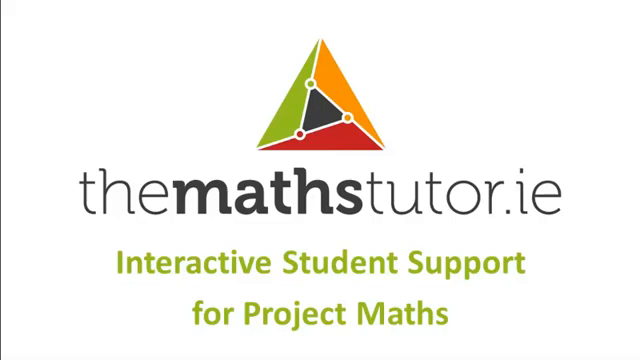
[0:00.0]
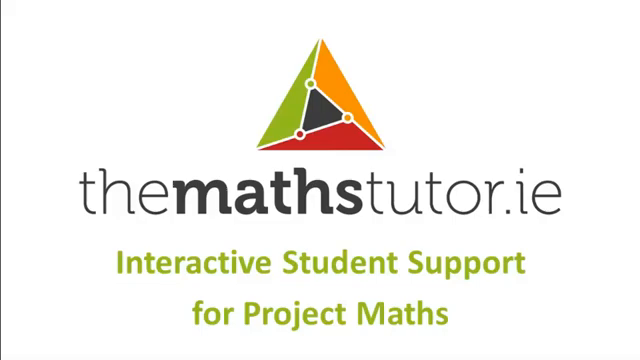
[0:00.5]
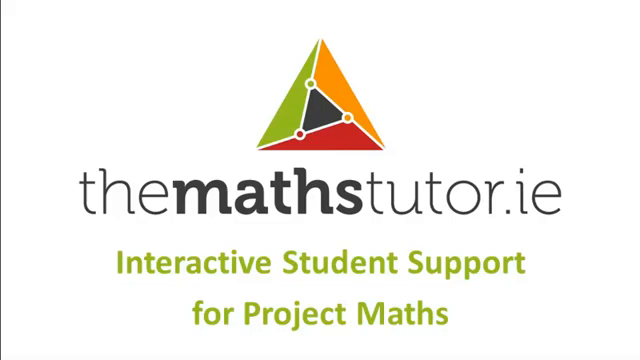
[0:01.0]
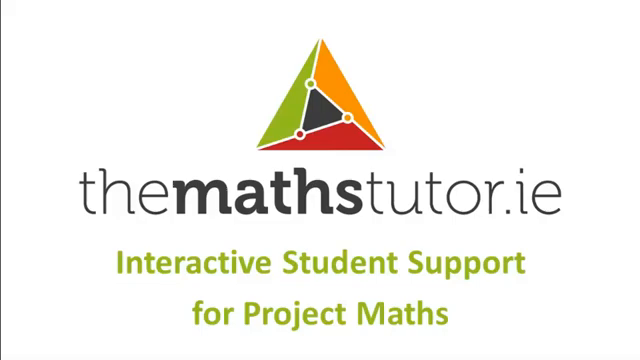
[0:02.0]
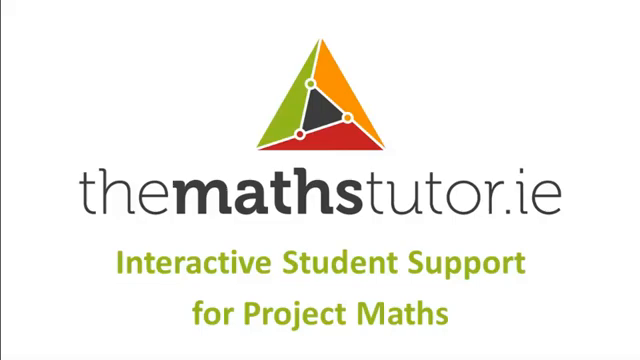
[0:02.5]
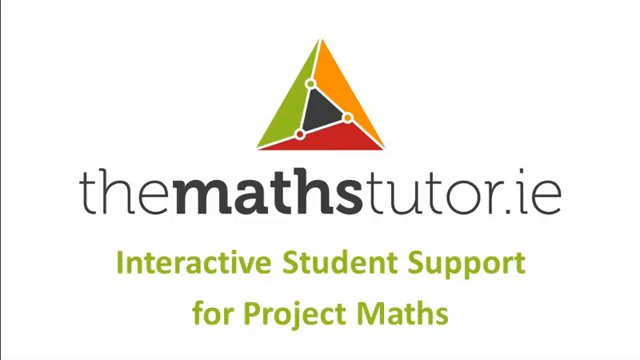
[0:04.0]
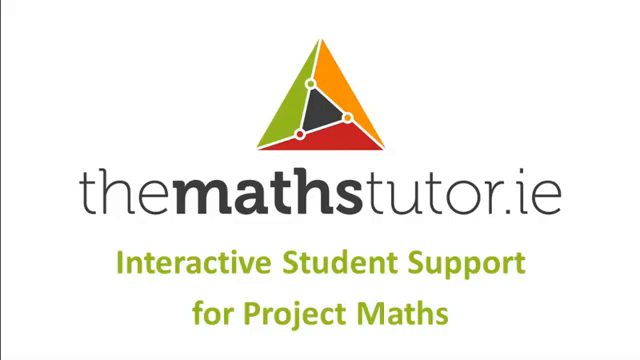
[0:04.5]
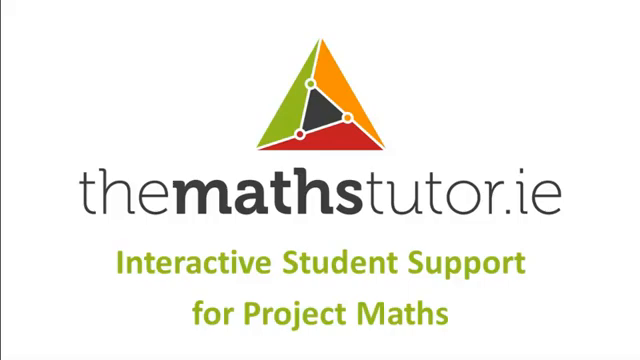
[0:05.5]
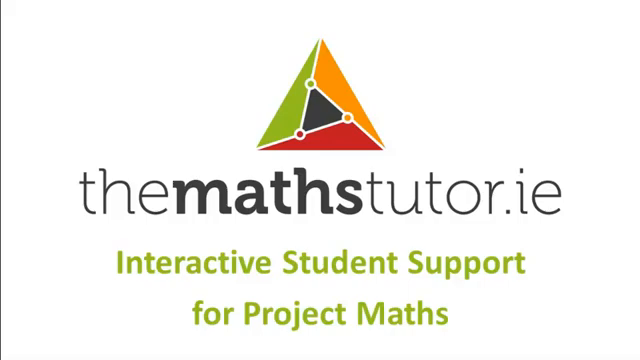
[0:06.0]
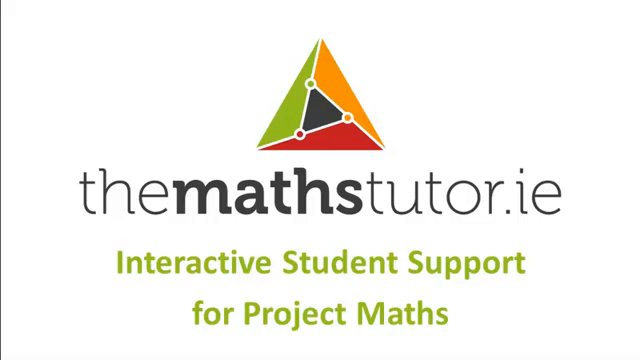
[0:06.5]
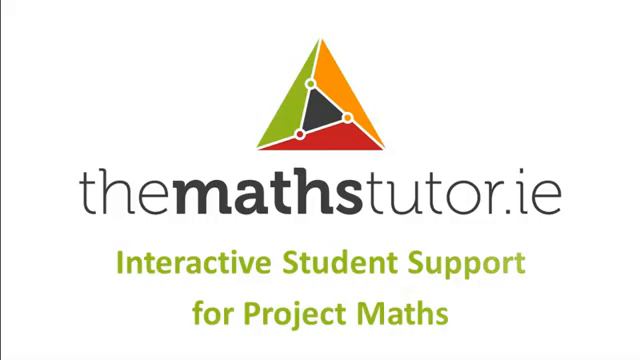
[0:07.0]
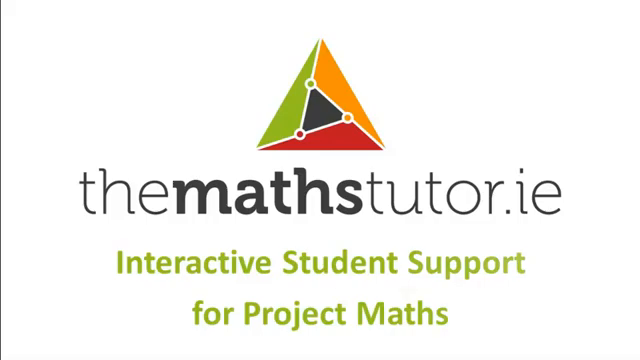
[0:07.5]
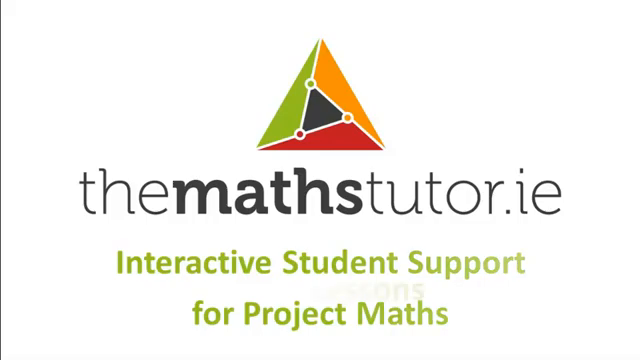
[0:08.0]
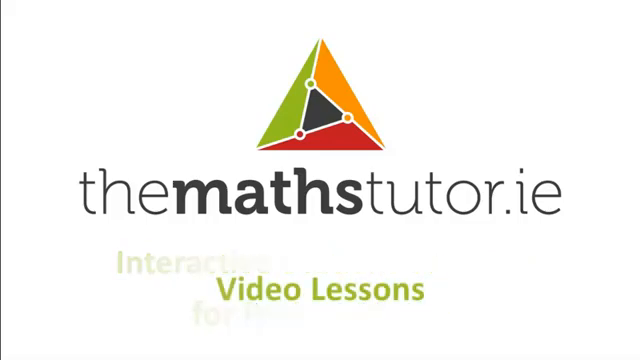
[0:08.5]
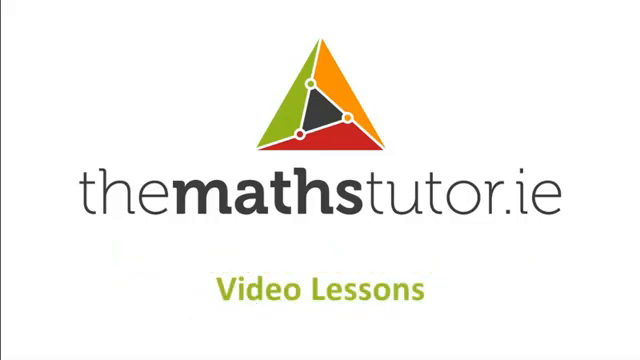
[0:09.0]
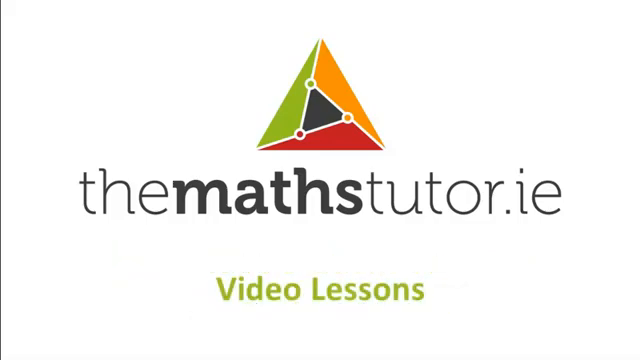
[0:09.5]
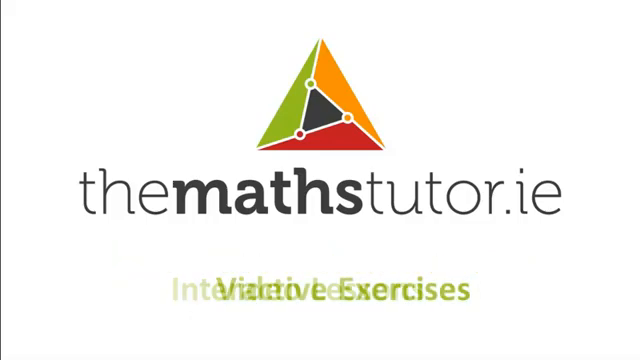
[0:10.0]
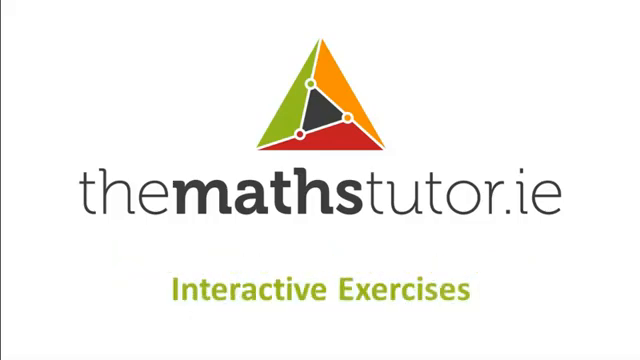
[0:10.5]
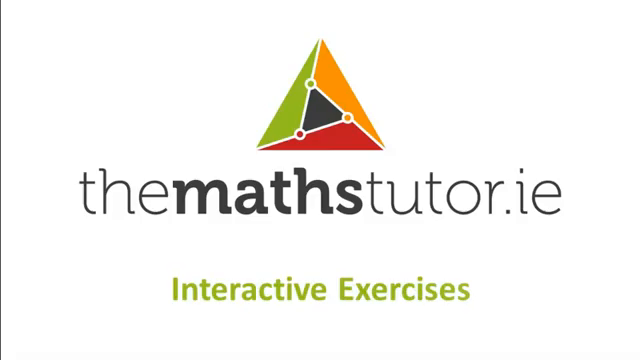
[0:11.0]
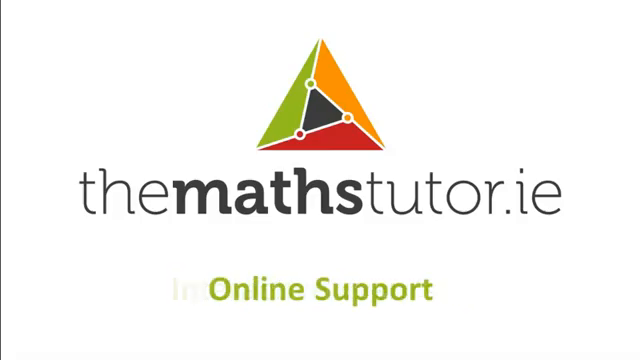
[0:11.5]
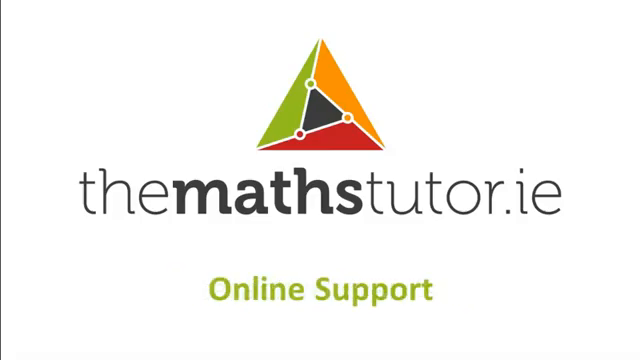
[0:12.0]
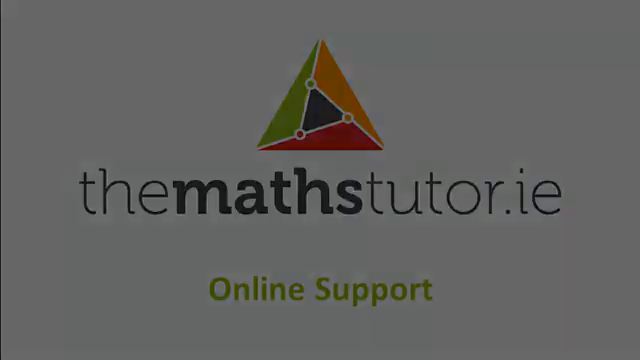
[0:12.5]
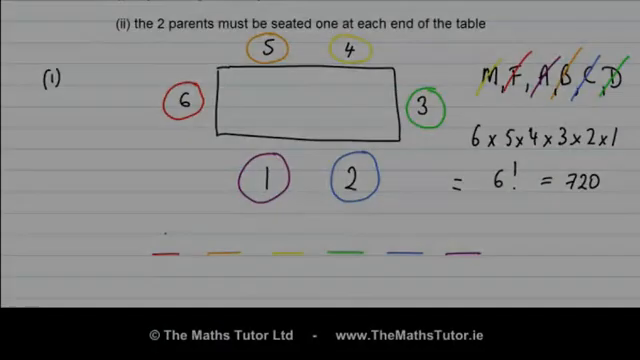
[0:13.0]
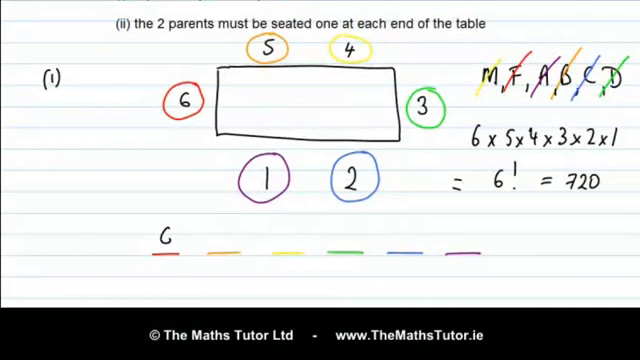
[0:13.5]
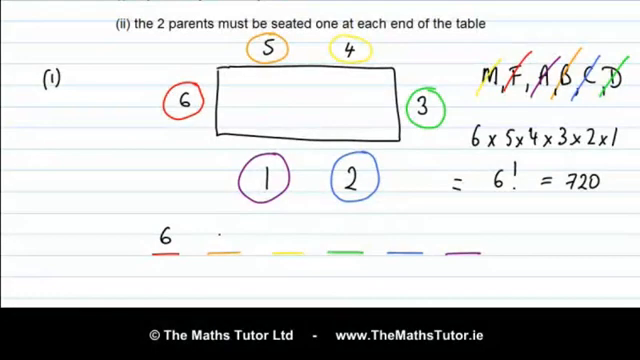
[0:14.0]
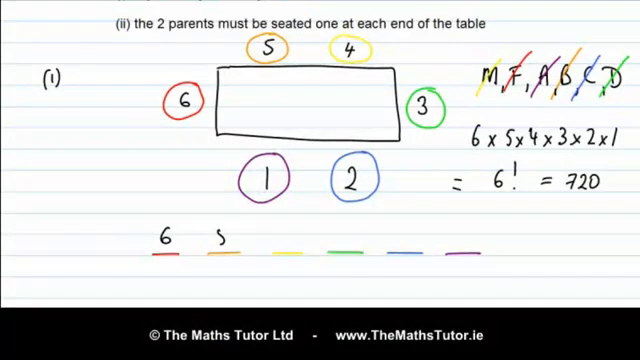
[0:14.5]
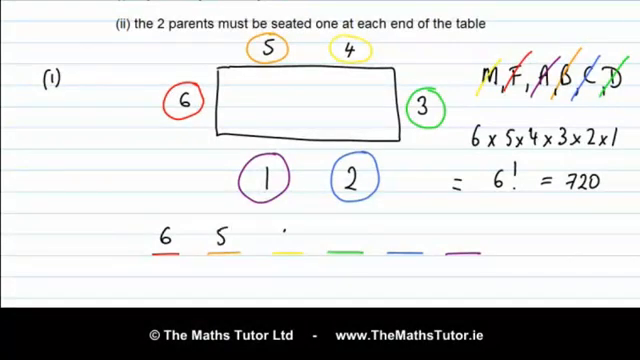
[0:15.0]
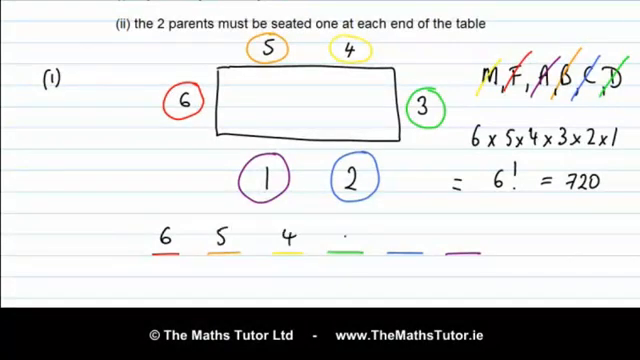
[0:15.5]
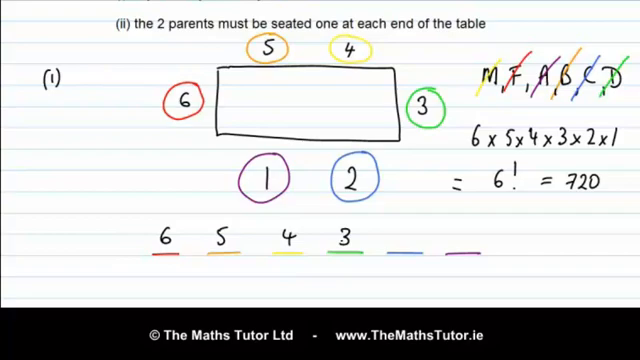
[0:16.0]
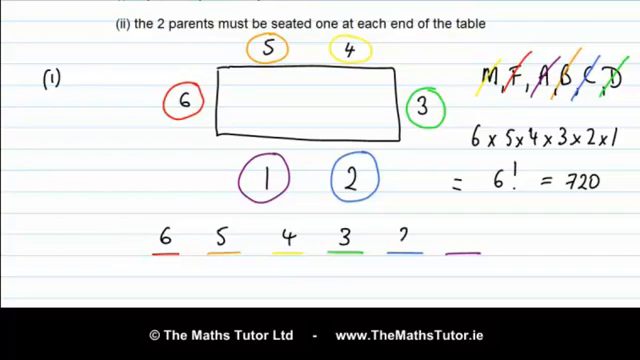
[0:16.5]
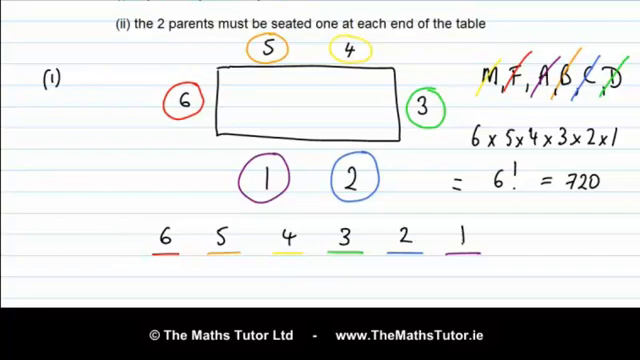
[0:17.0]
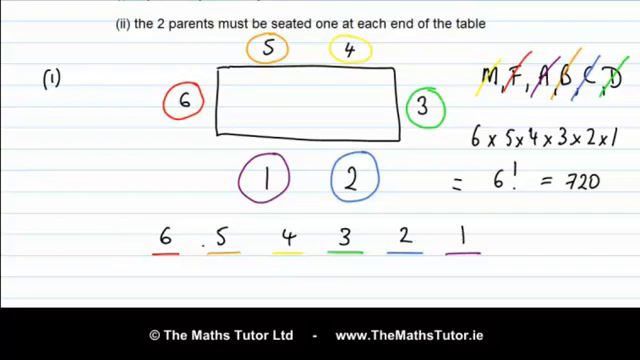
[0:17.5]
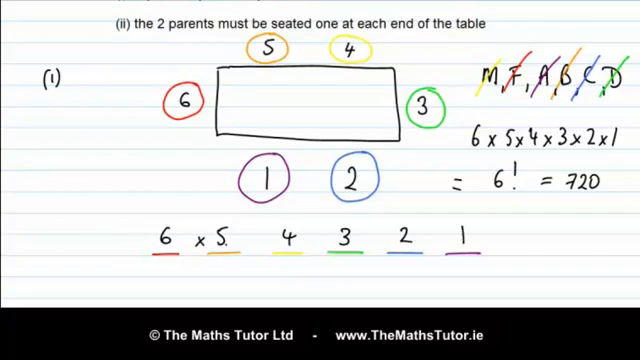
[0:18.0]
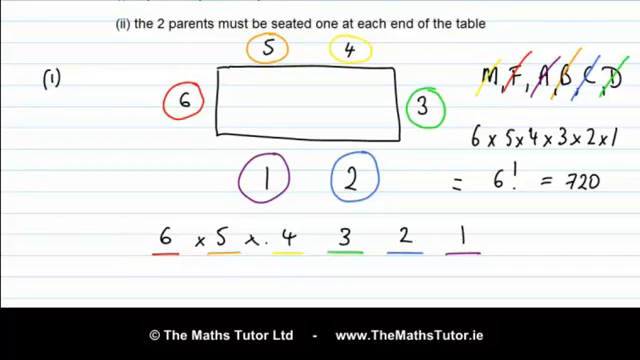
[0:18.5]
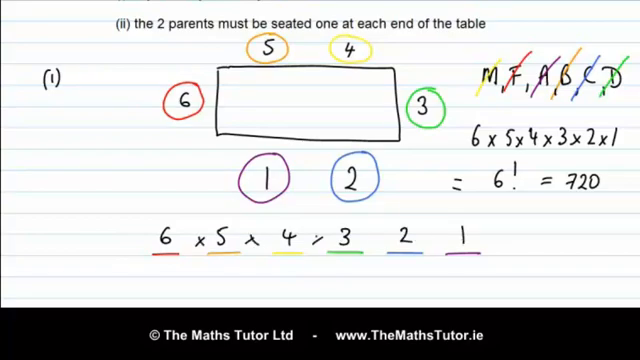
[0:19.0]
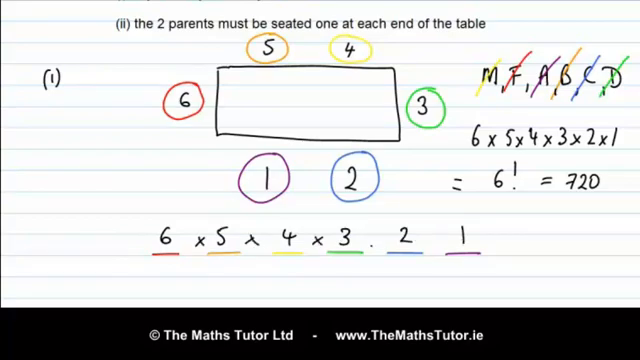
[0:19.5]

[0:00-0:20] The title screen shows the text "TheMathTutor.ie" and "interactive student support for Project Maths." At the top there is a four-coloured icon in green, orange, red and black that looks like a pyramid that is flat on top. The text then changes from "interactive student support for Project Maths" to "video lessons," then "interactive exercises," then "online support." Next, a page shows a question on item 2 that says "the two parents must be seated one at each end of the table." Below it is an answer to item 1: a rectangle is drawn with 1 and 2 at the bottom, 3 on the right side, 4 and 5 on the top side and 6 on the left side. There are also the letters M, F, A, B, C, D, which are cancelled with pens in different colours, and in the same way the numbers labelling the rectangle are circled in different colours. Below the letters is 6 x 5 x 4 x 3 x 2 x 1, and below that an equals sign with 6! equal to 720. Numbers are then written at the bottom of the rectangle, corresponding to the colours the rectangle's numbers are circled with: 6 on the red line, 5 on the orange, 4 on the yellow, 3 on the green, 2 on the blue and 1 on the purple, and multiplication signs are put between the numbers.